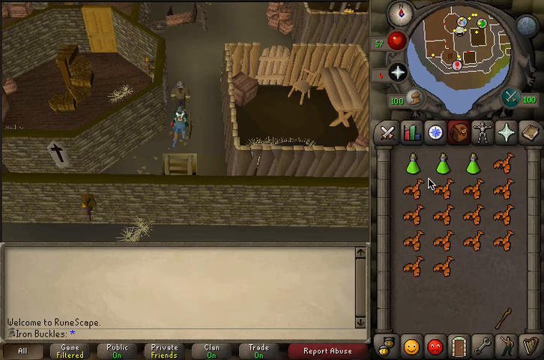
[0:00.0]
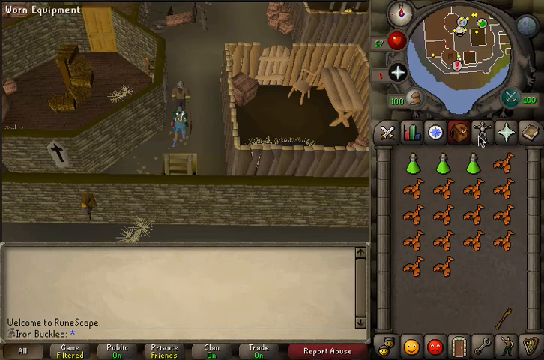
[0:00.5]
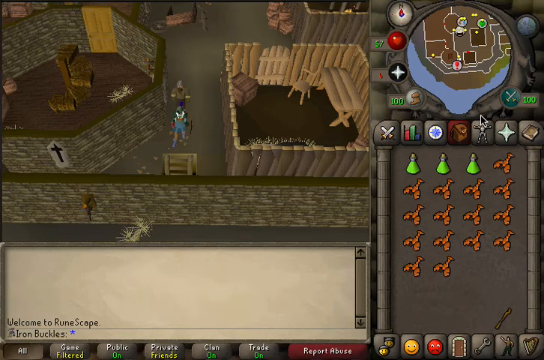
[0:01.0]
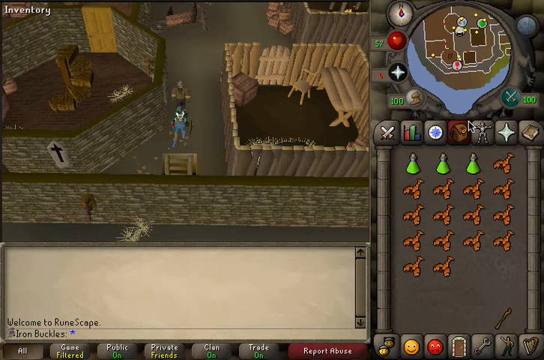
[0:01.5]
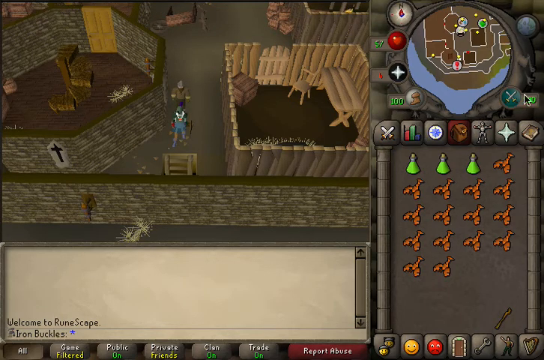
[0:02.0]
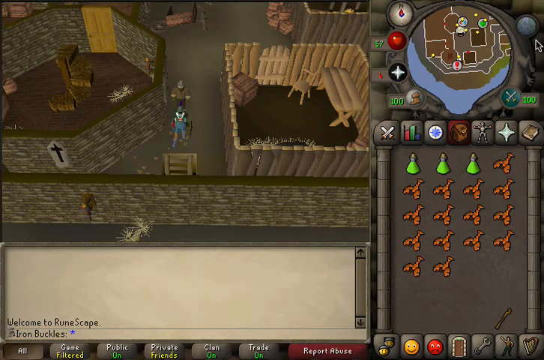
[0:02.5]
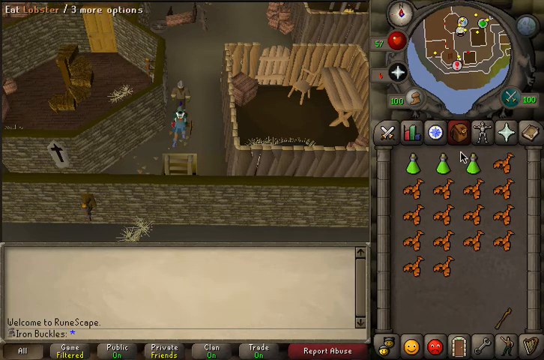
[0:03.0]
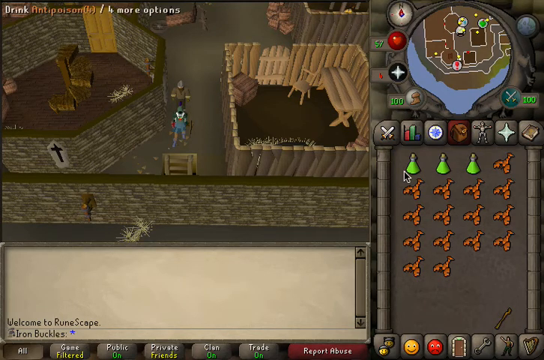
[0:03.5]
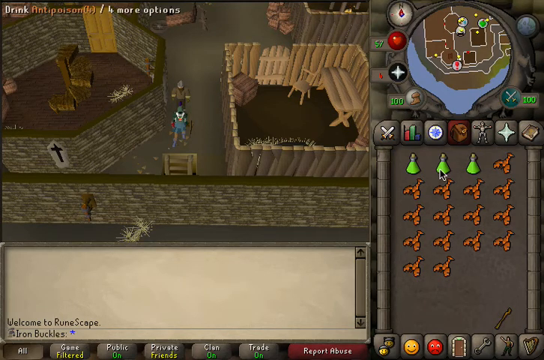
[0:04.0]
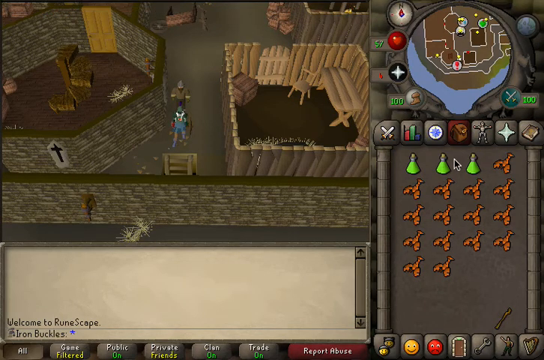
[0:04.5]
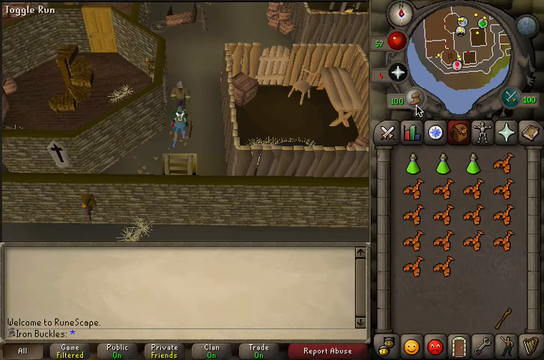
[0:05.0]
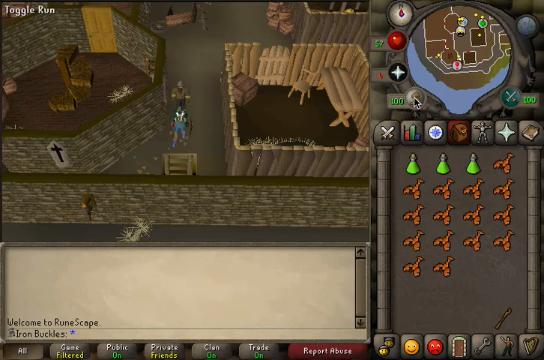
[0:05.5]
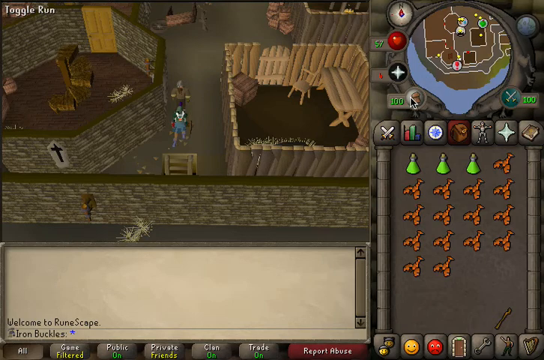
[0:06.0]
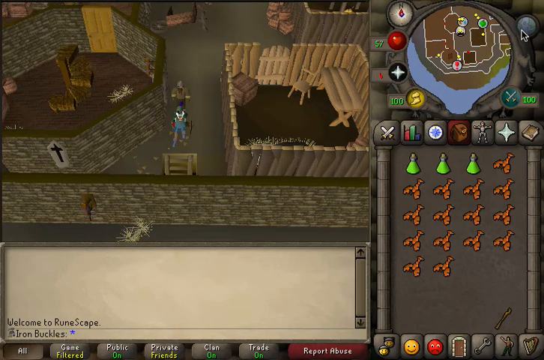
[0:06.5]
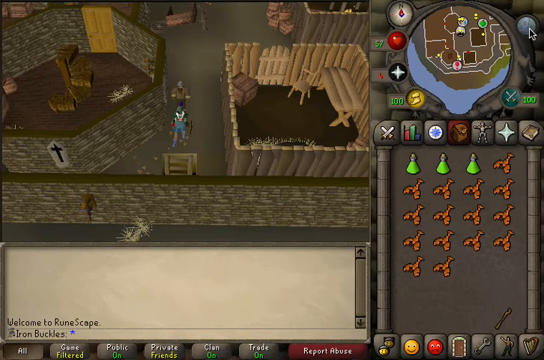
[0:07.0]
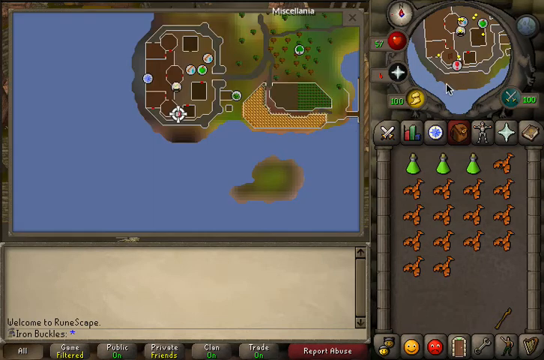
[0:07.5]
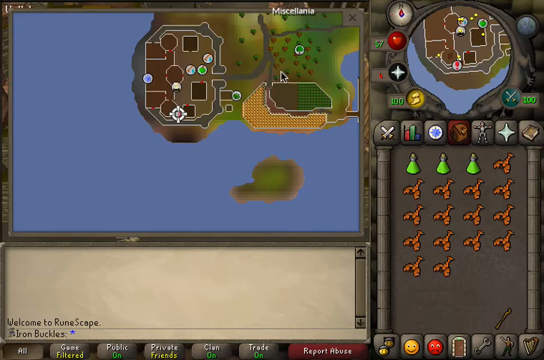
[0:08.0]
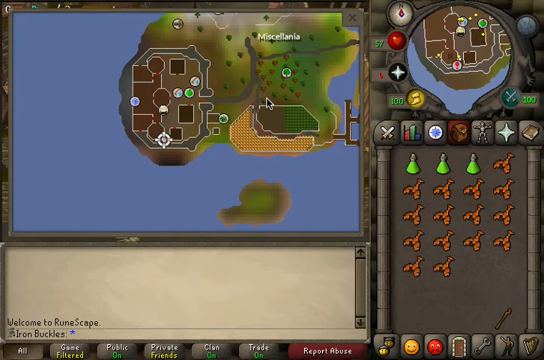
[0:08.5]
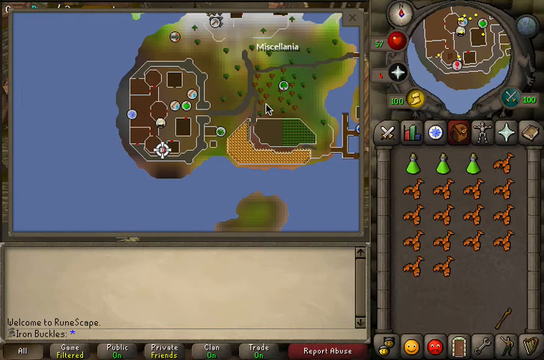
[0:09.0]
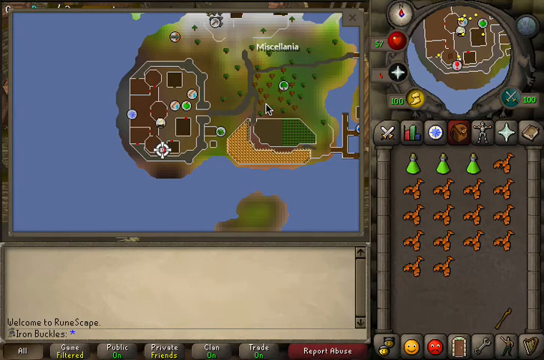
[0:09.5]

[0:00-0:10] The video opens on a game that looks like some type of strategy-based game, possibly an older one from about 10 years ago, with really simple graphics. A person stands still in what looks like some type of medieval town. The mouse hovers over various parts of the gaming area. A HUD at the top has a map showing where the character is and where some other characters may be, apparently represented by gold dots. Another area possibly shows stats or selections: a sword, a graph, something else, an item bag, what looks like a person icon, and a couple of other icons. The map is apparently shown a little bigger, seemingly highlighting the outer area of the city to show some grass area and miscellaneous things around it.